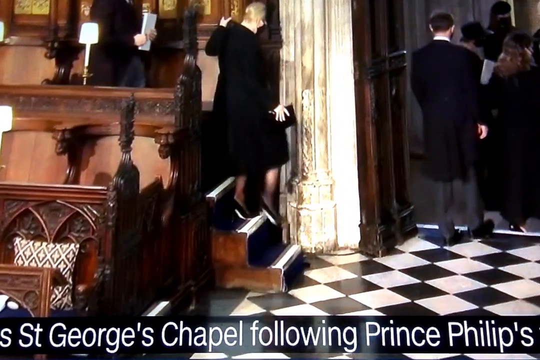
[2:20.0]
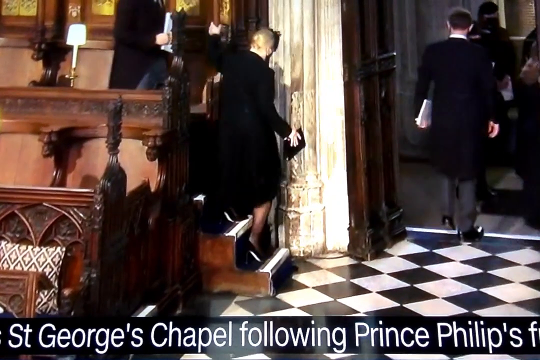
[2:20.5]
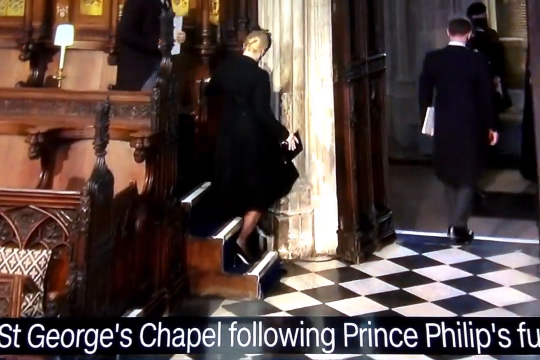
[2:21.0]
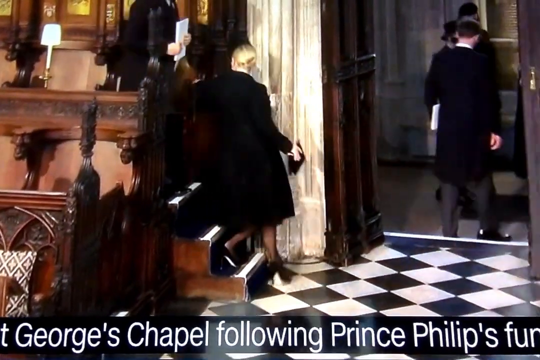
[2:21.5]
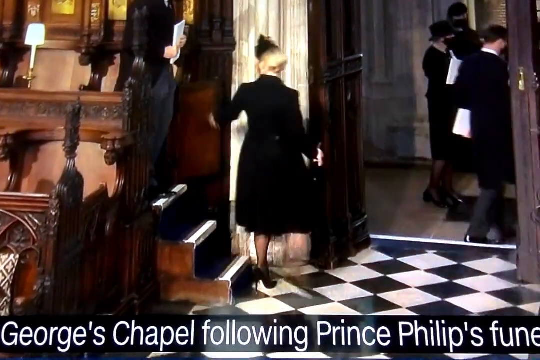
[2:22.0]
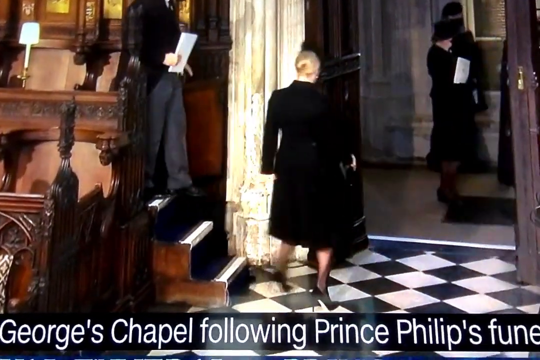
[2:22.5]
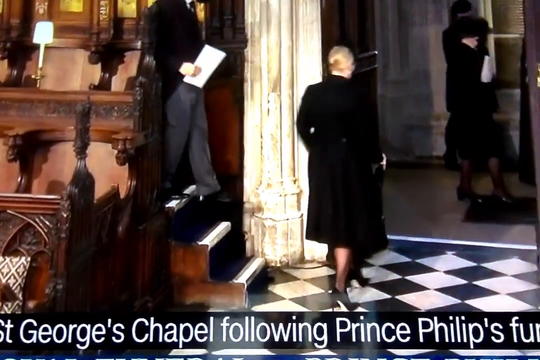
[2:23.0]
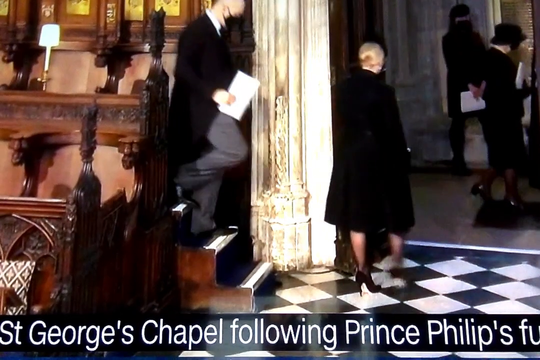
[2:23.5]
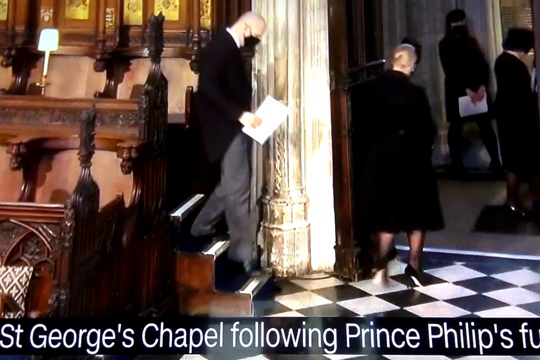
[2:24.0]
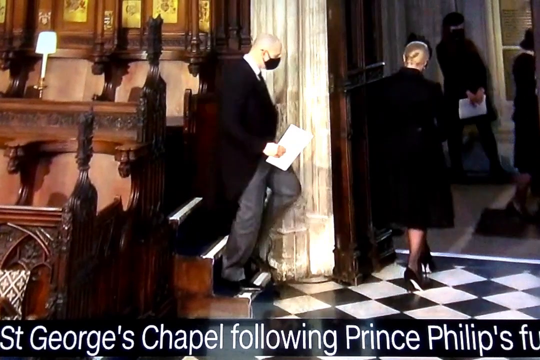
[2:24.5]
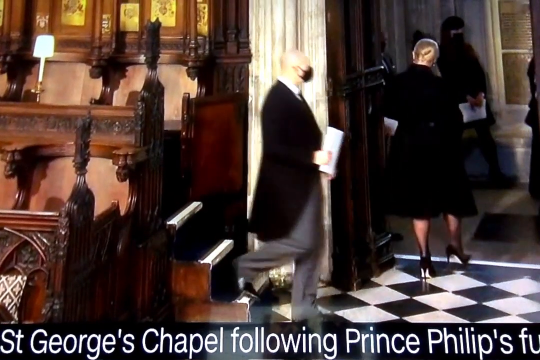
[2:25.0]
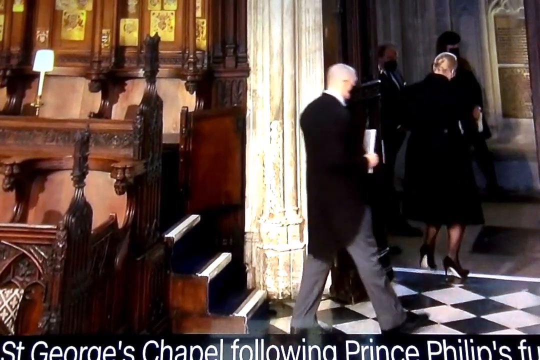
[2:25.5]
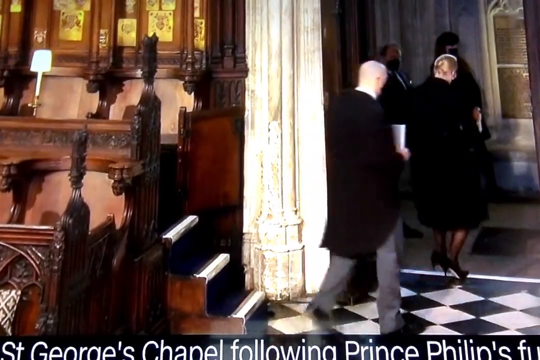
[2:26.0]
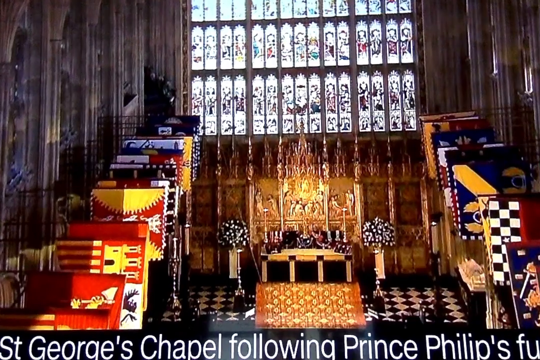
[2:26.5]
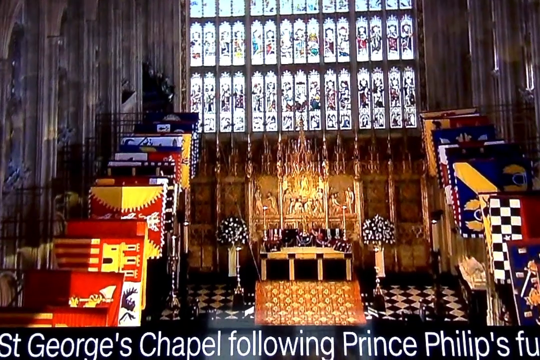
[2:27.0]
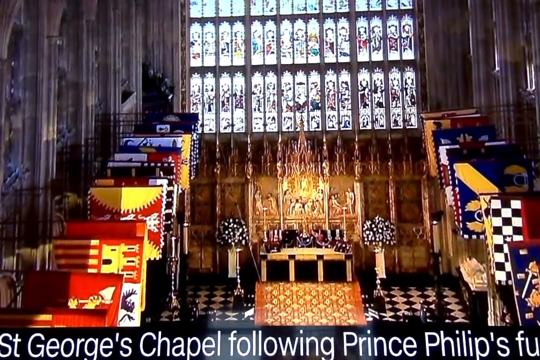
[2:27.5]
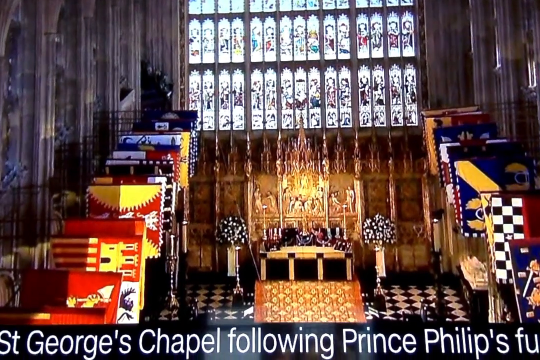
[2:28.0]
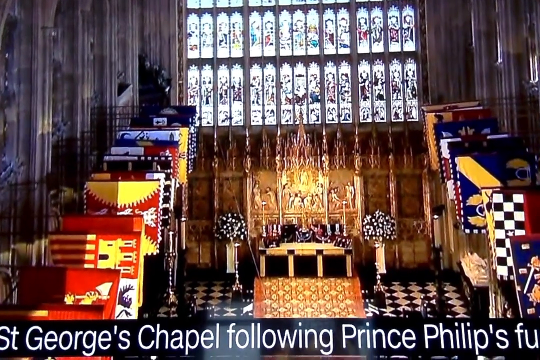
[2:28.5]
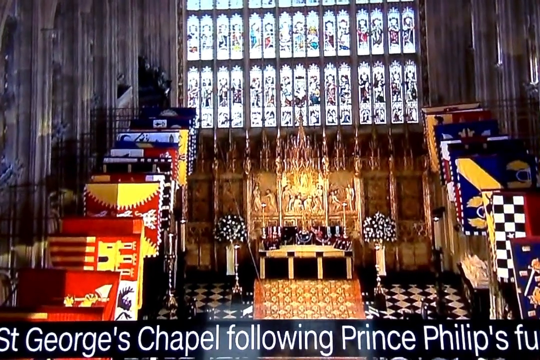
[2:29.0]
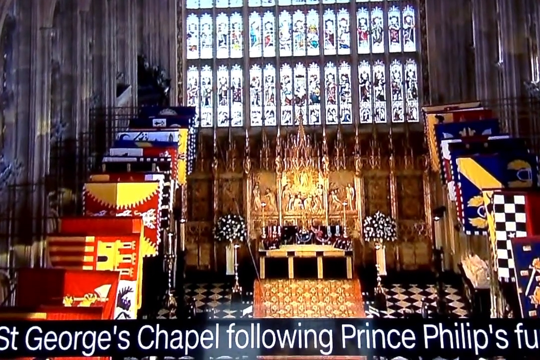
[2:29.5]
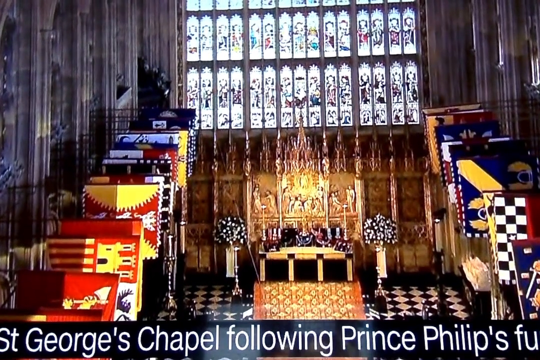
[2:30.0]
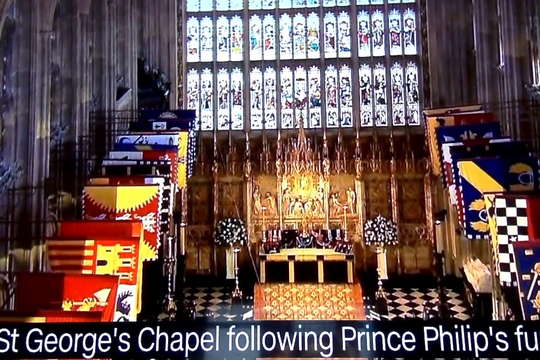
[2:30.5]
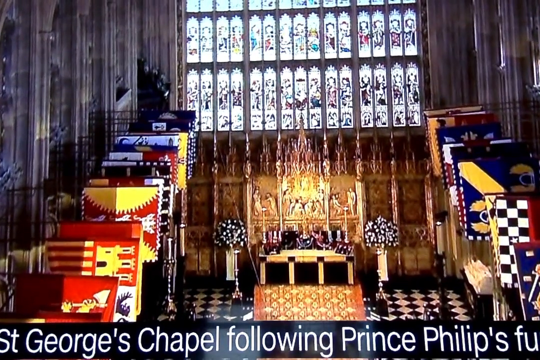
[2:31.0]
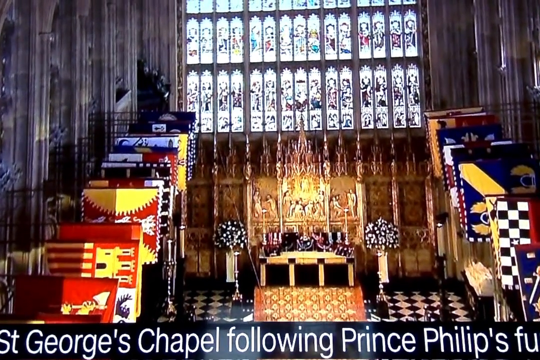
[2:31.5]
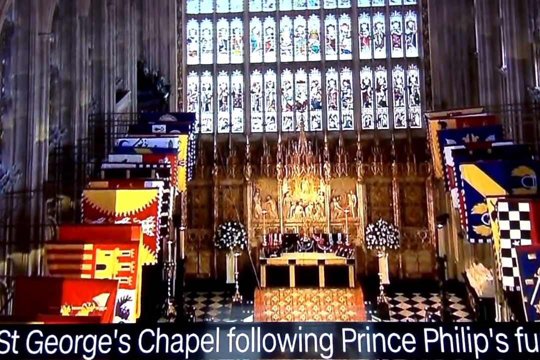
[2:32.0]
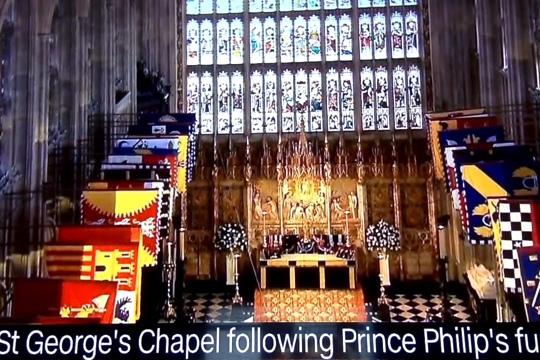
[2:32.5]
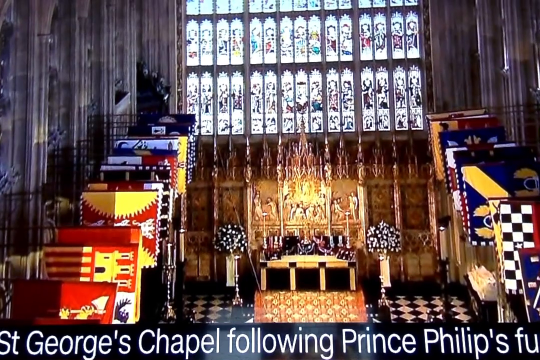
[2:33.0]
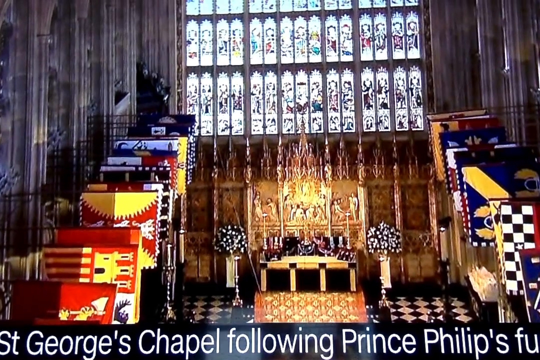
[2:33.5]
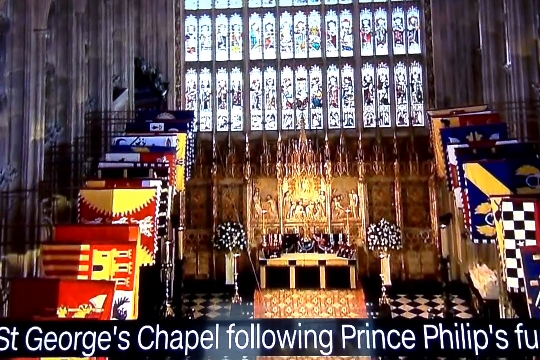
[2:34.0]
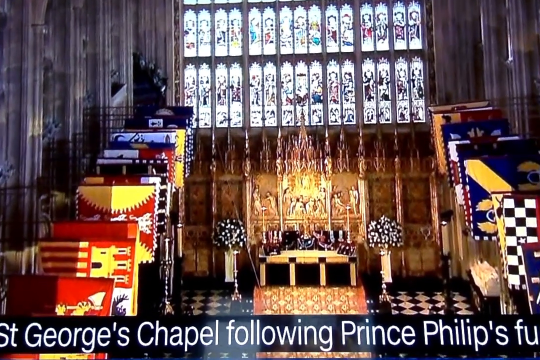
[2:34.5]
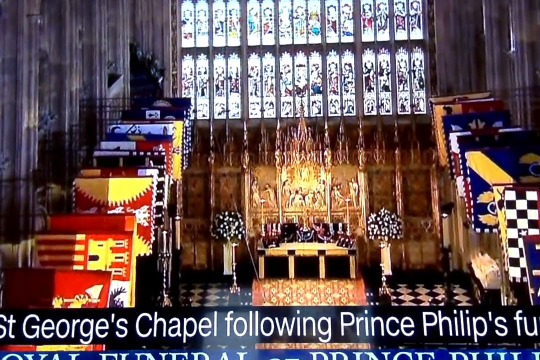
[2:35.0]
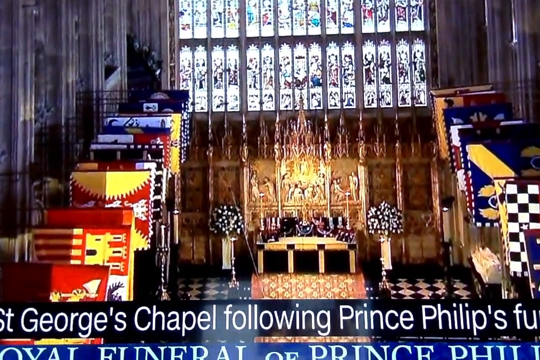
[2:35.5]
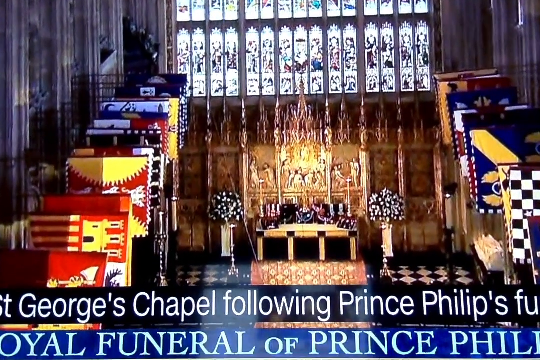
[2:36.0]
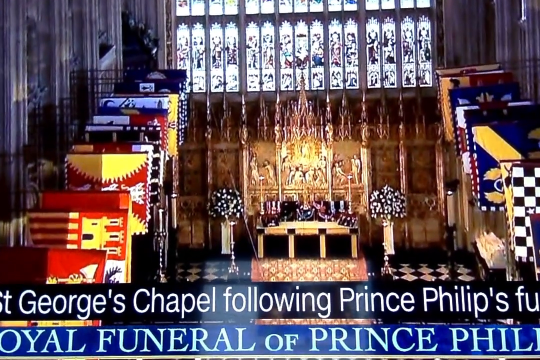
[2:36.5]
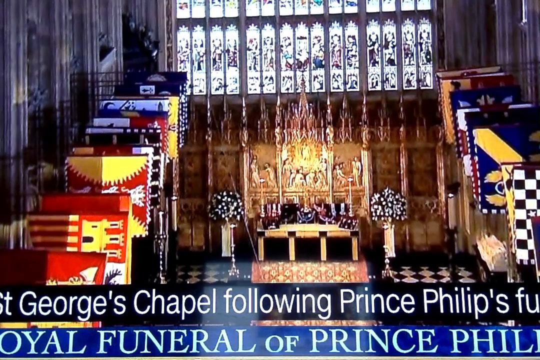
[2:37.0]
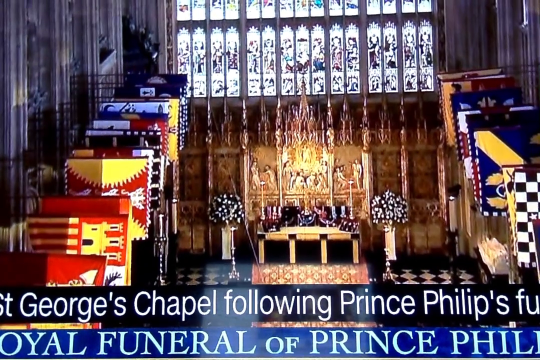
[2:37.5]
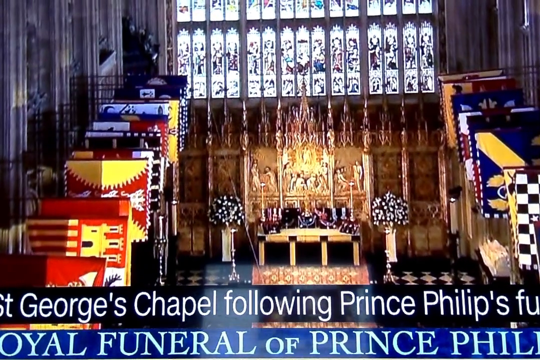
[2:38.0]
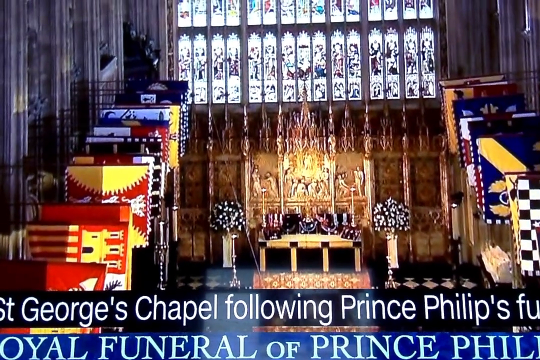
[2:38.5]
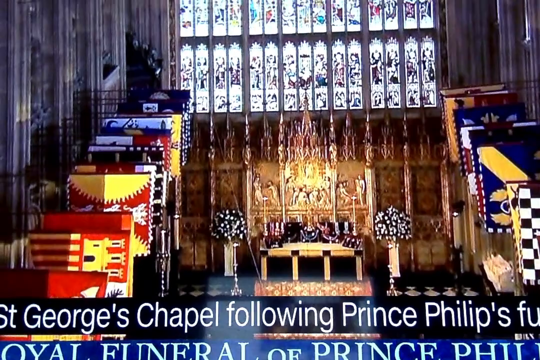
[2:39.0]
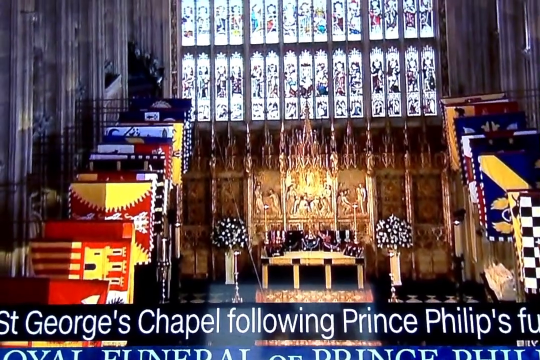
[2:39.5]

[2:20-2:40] People who were sitting on benches in the church walk down some stairs and exit towards the left, where there is a giant exit. The floor is checkered, made of black and white tiles. The view then pans out to show the front of the church, with decorations and a whole bunch of decorated windows that look like they have saints on them, and flags in a bunch of different colors on each side of the wall. Text at the bottom reads "Saint George's Chapel following Prince Philip's funeral". It seems they are all at a funeral that has ended and are leaving. They all seem to be dressed in black, wearing black masks and holding white pamphlets.